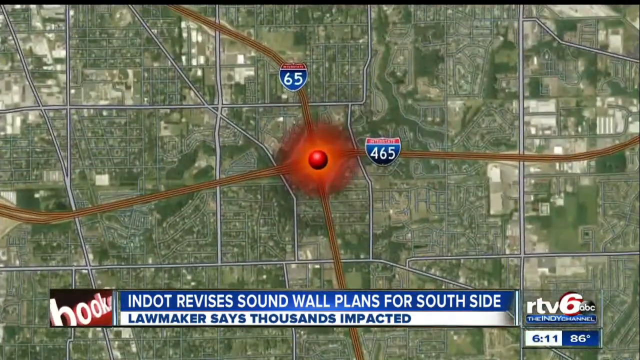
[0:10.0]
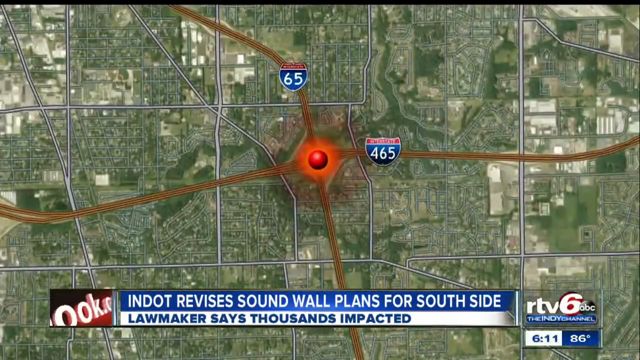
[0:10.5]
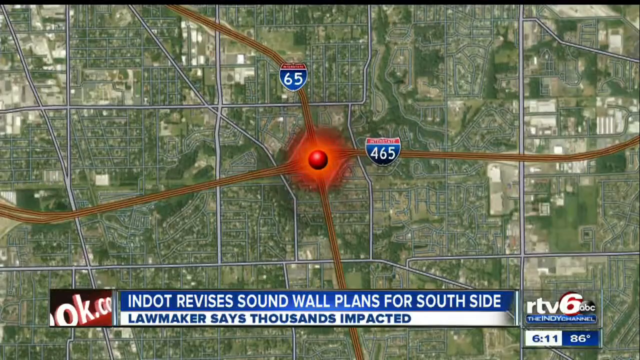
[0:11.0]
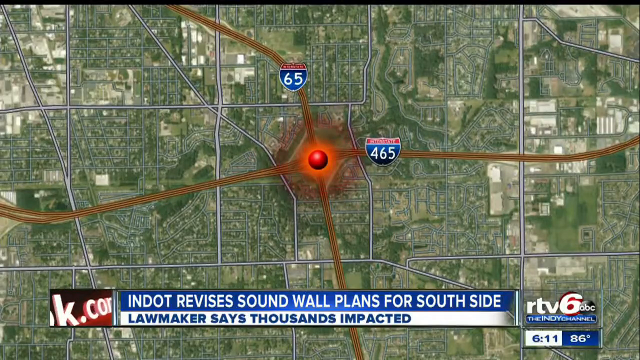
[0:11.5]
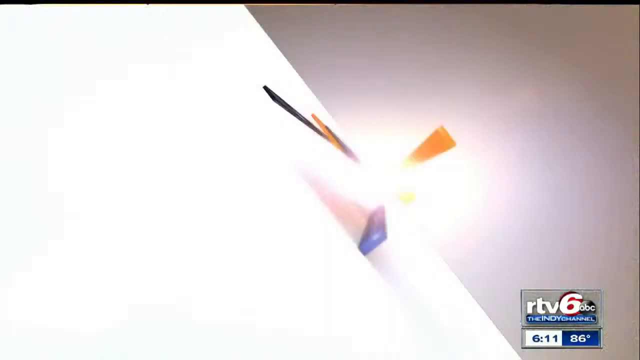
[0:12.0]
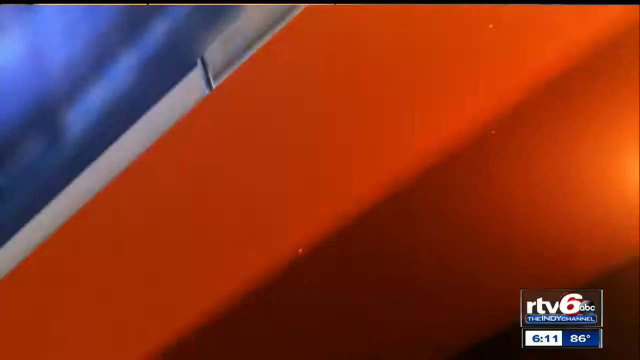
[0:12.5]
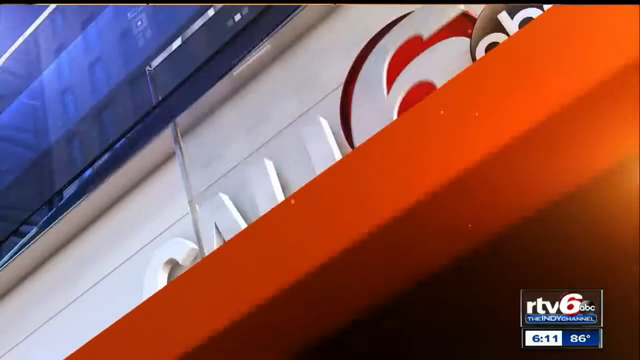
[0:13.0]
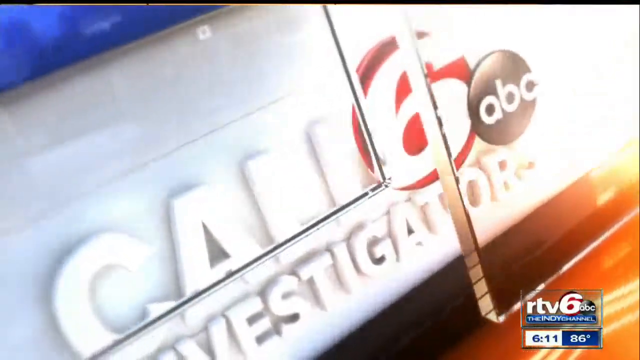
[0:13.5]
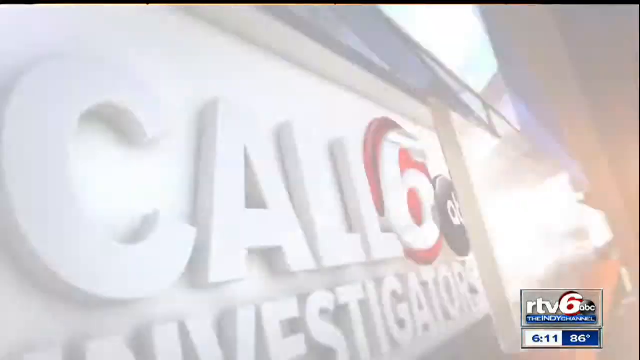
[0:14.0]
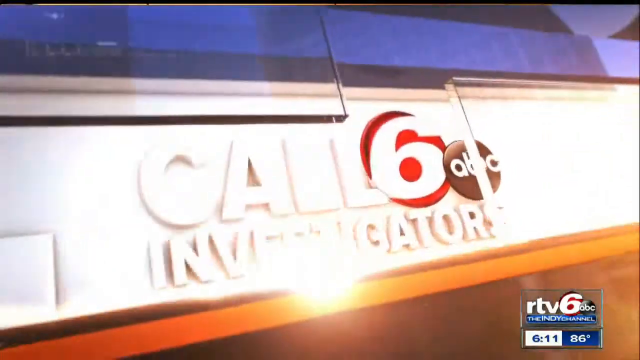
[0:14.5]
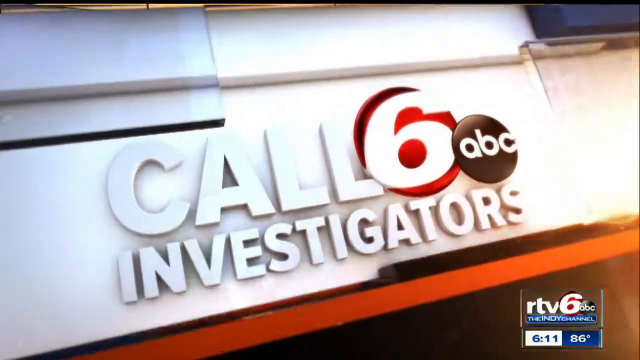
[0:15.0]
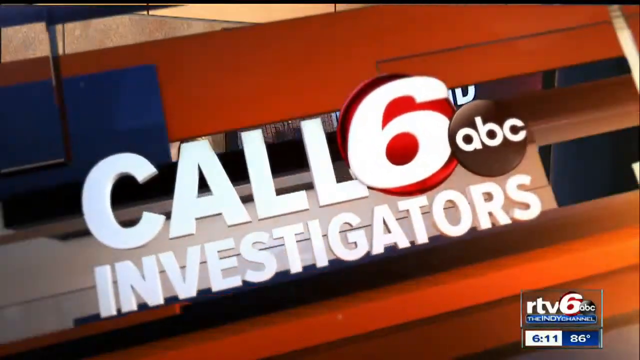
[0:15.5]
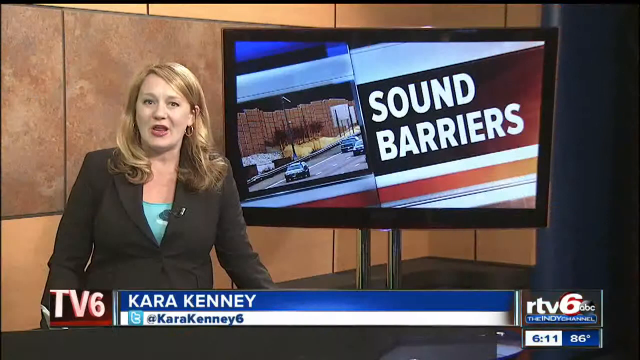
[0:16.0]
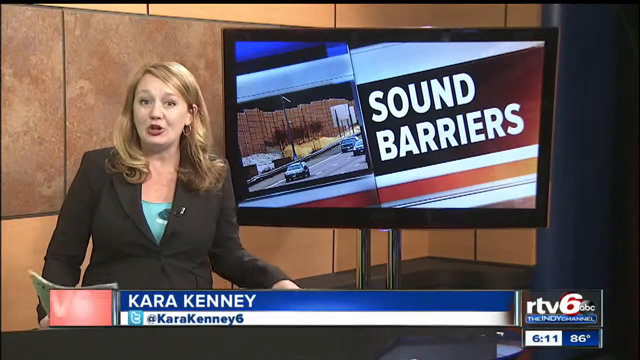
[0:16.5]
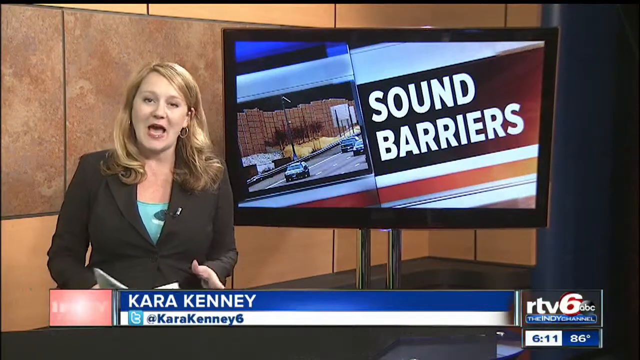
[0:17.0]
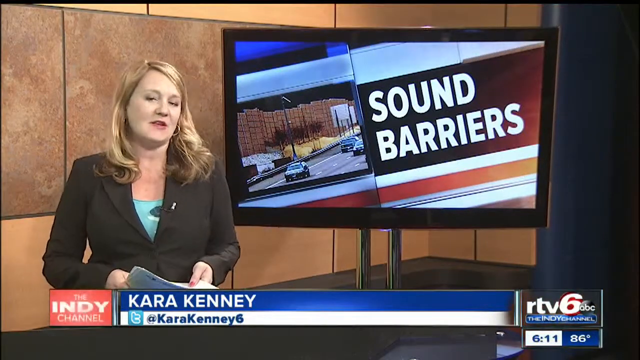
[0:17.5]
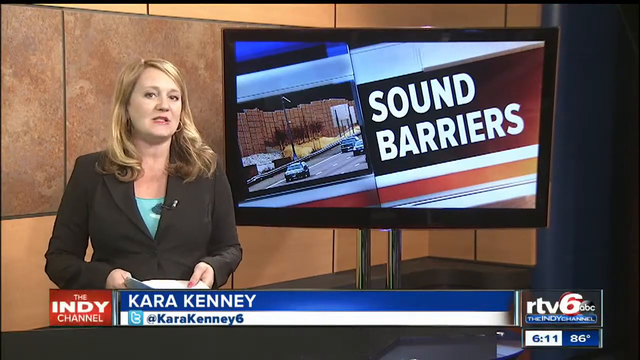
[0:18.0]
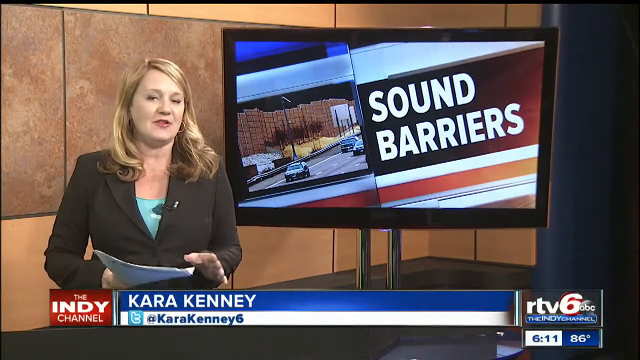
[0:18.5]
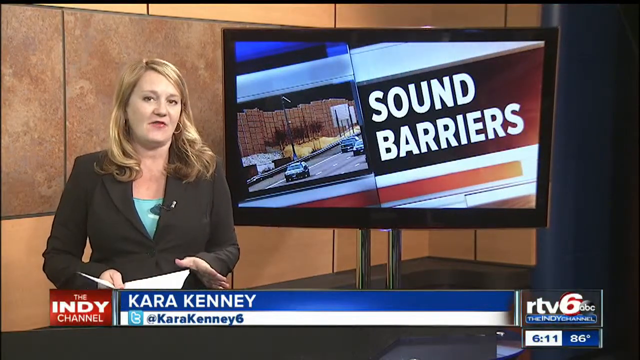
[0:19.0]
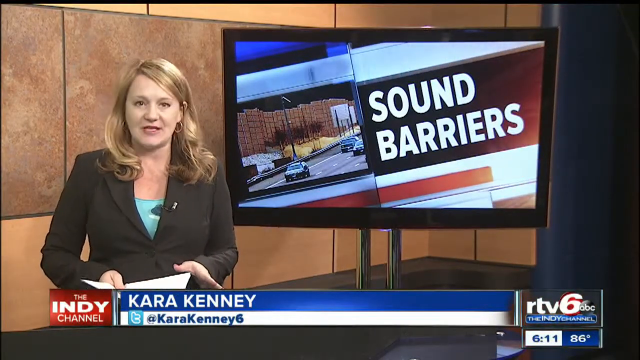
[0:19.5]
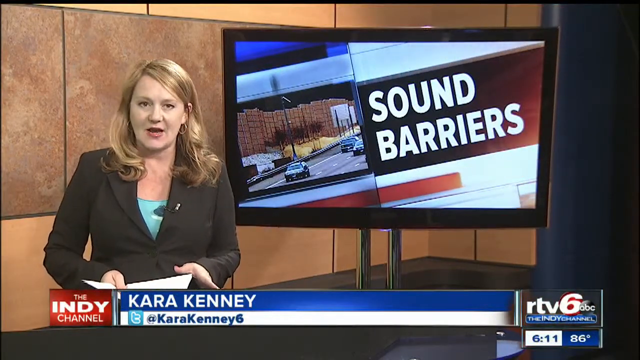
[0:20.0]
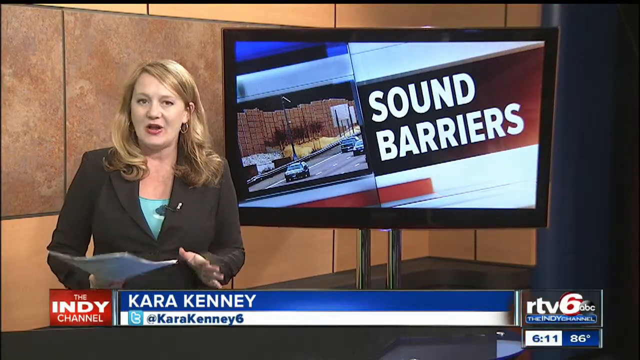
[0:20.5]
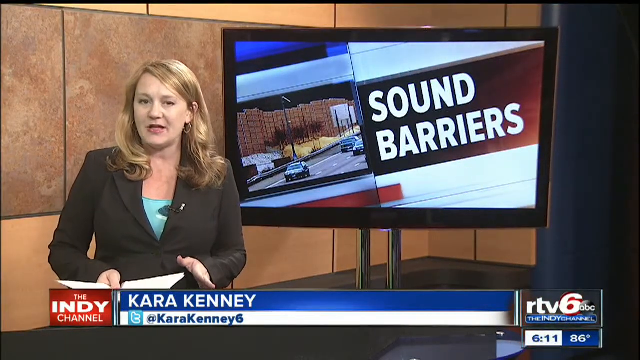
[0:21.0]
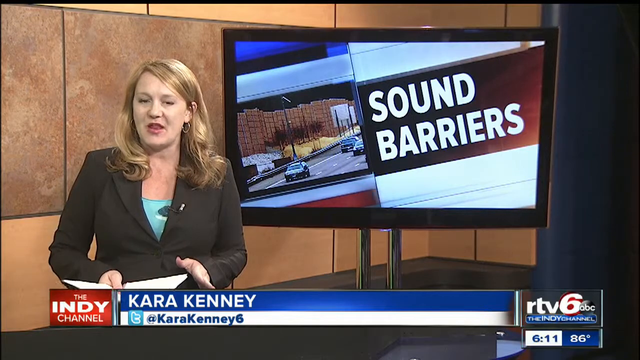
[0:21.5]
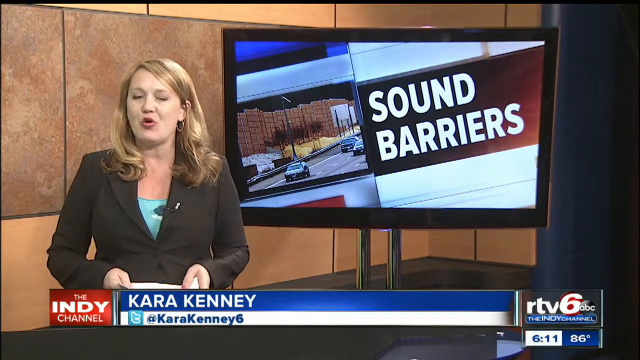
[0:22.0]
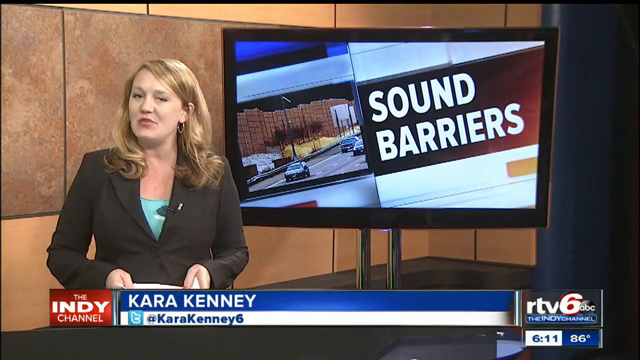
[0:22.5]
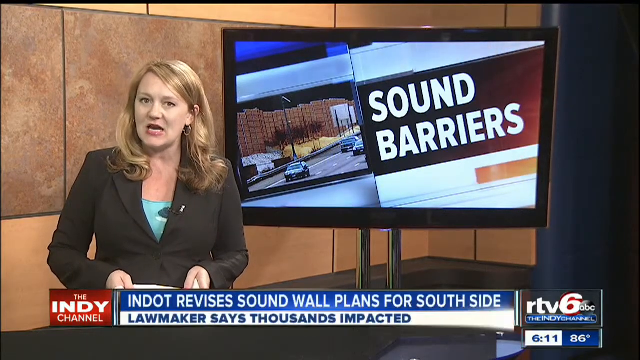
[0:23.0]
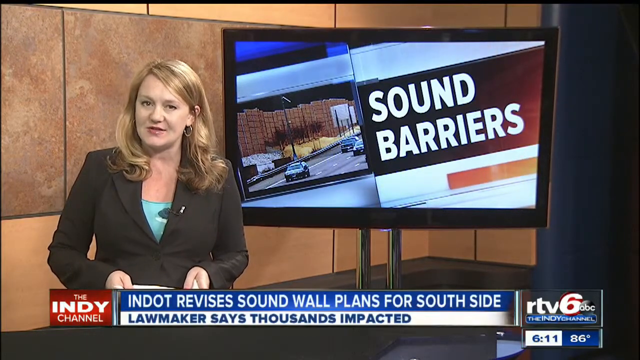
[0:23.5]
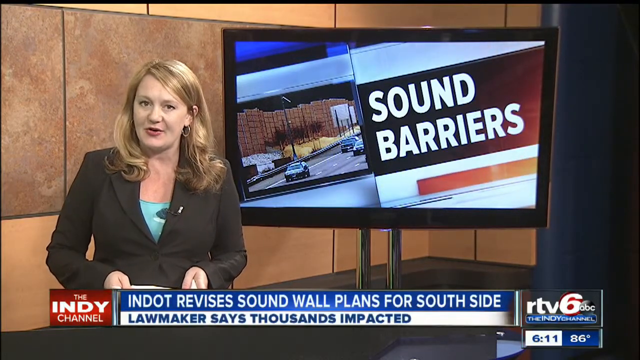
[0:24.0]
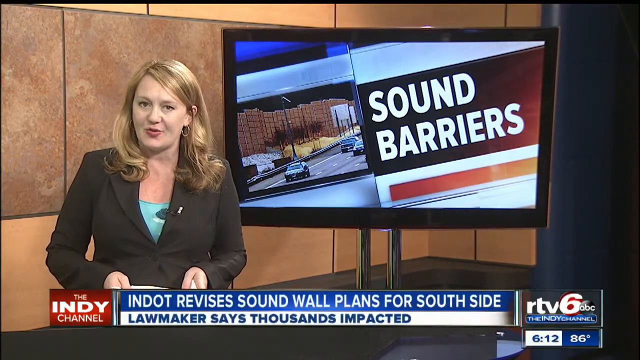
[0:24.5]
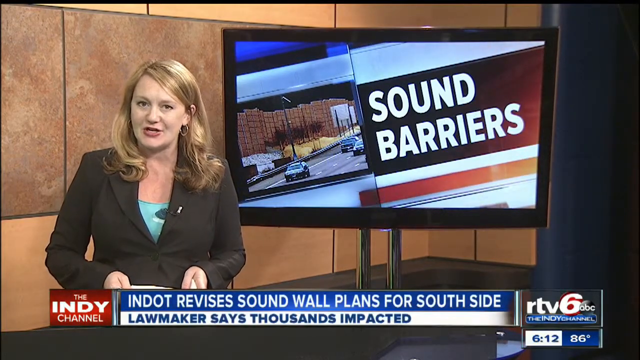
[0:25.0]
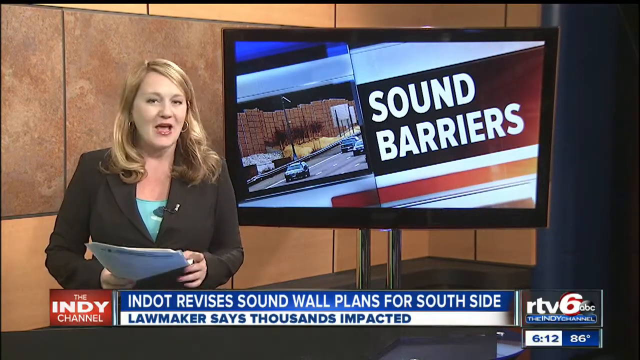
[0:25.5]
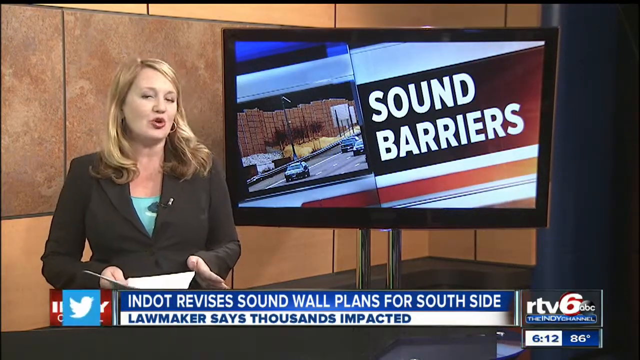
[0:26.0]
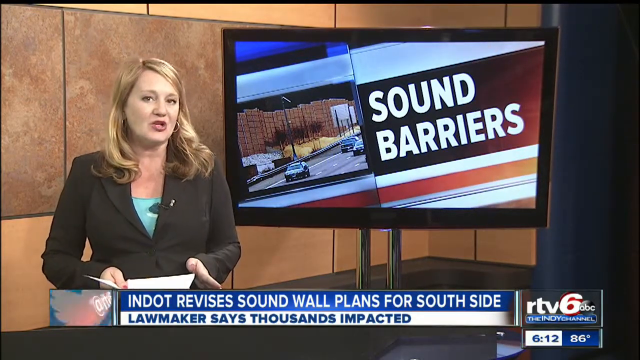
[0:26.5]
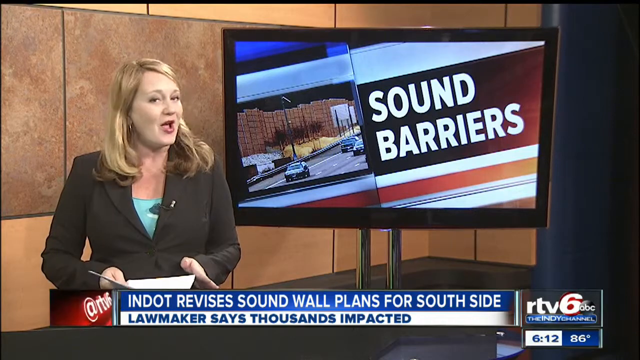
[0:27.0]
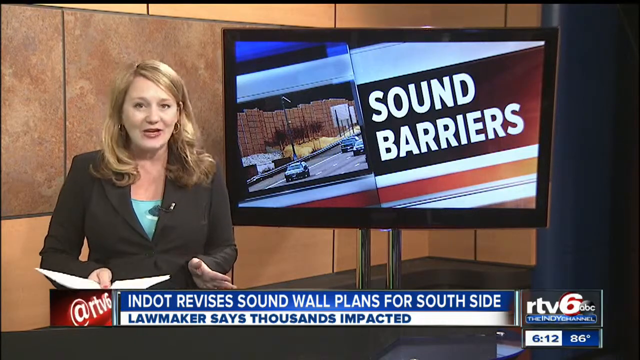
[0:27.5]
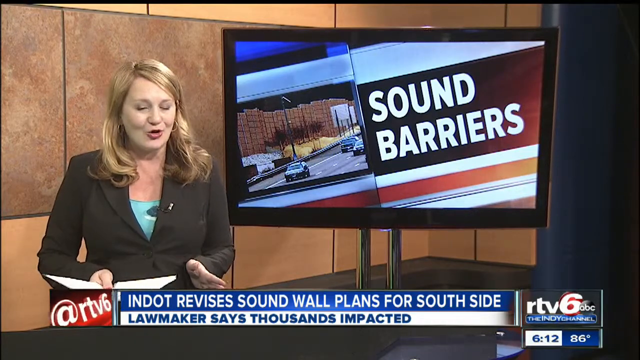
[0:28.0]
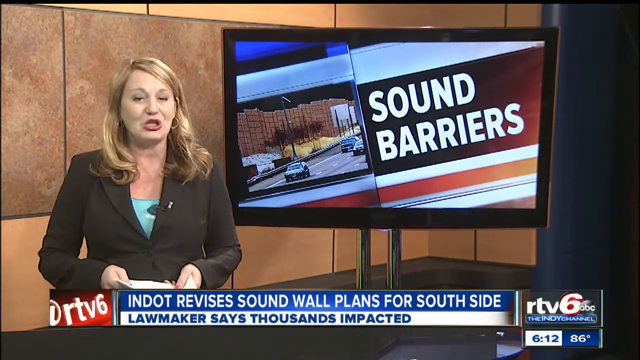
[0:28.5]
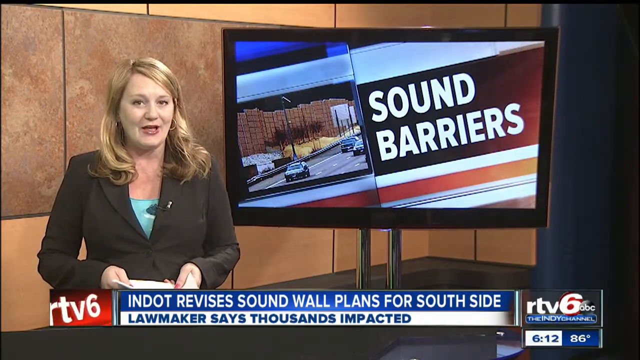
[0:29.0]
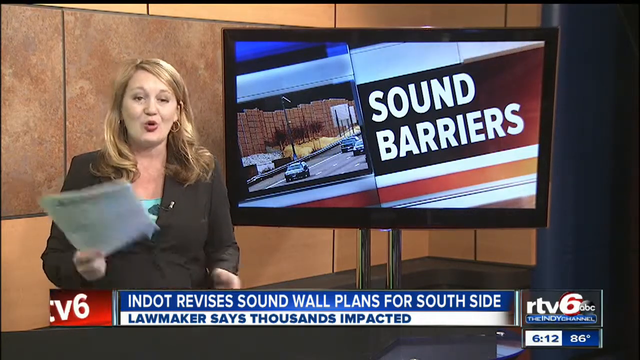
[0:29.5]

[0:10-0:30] Sound barriers are to be installed in areas 64, 65 and 465 and along the streets in those areas, aimed at disturbing sounds such as construction noise.